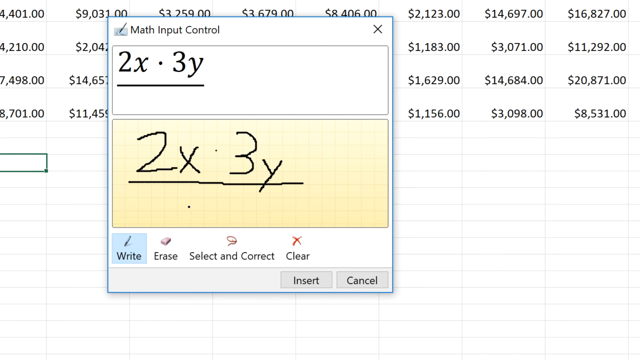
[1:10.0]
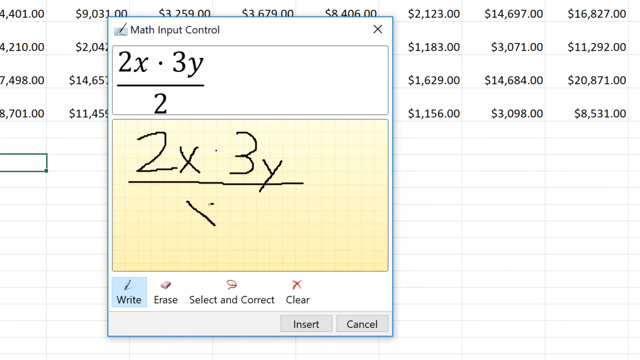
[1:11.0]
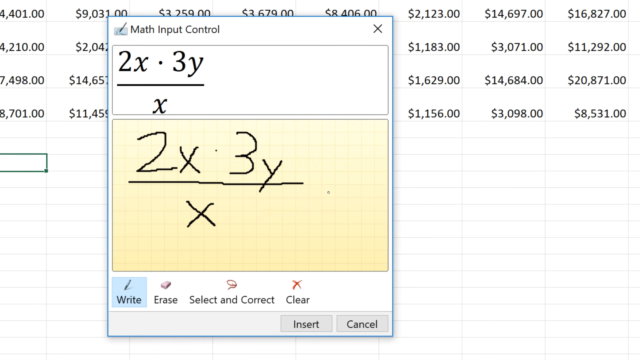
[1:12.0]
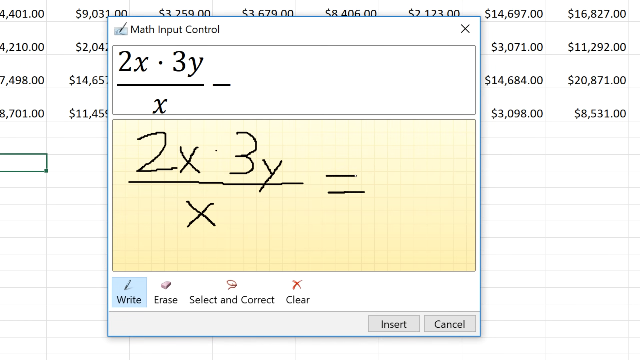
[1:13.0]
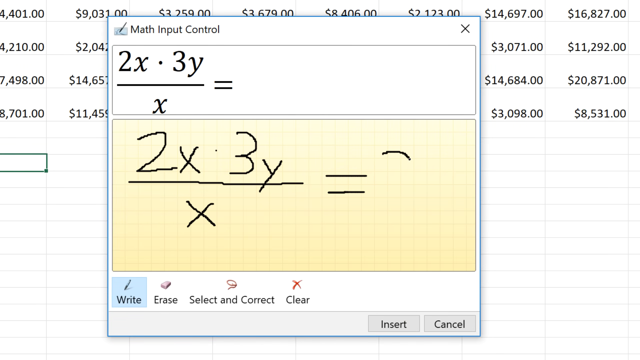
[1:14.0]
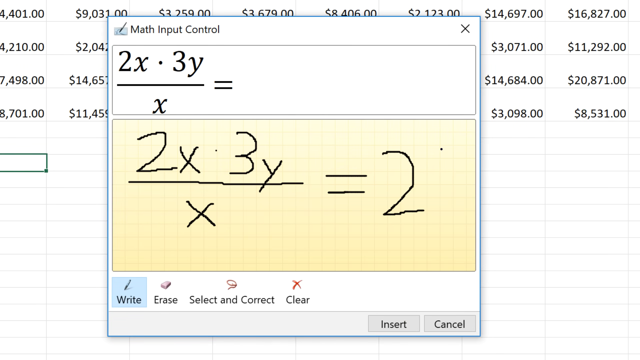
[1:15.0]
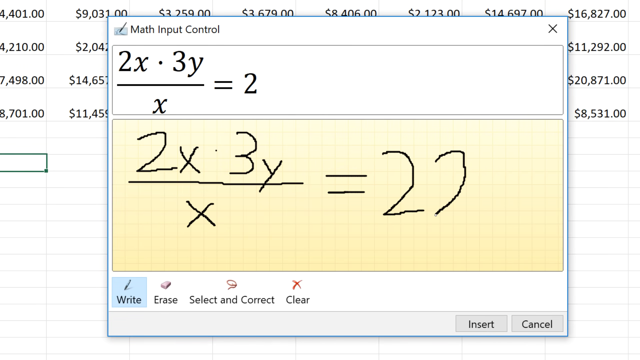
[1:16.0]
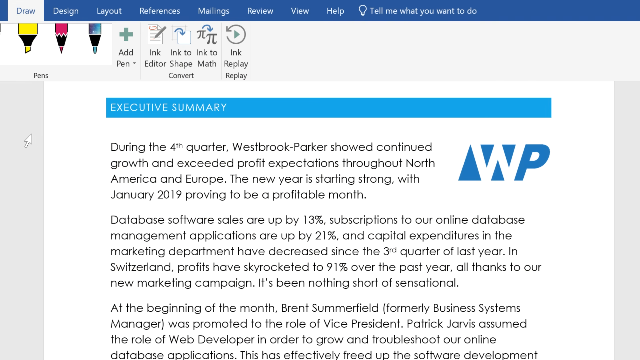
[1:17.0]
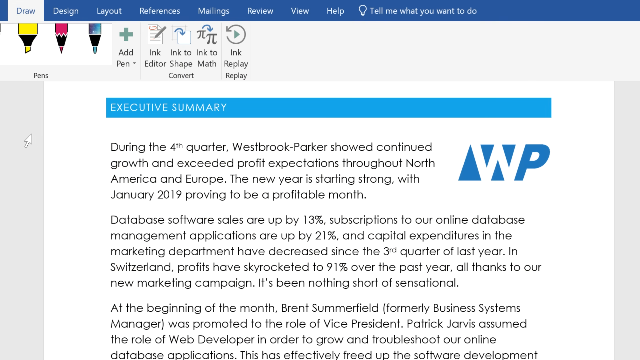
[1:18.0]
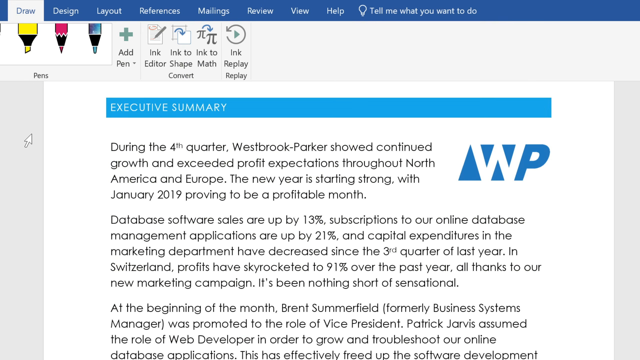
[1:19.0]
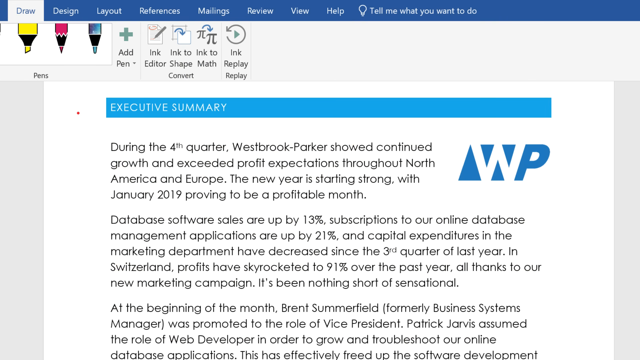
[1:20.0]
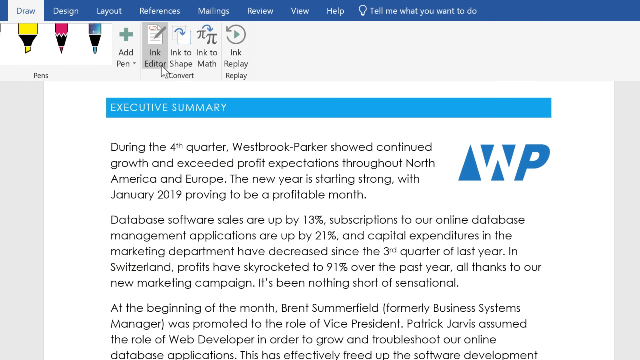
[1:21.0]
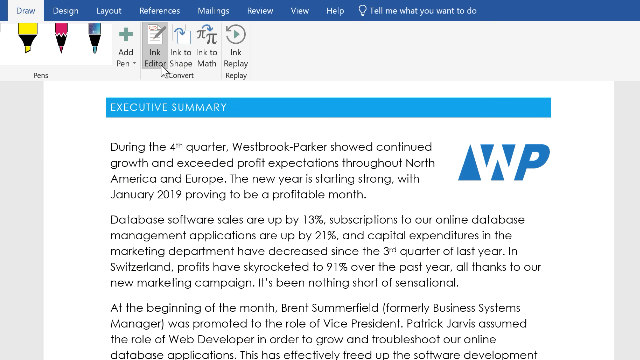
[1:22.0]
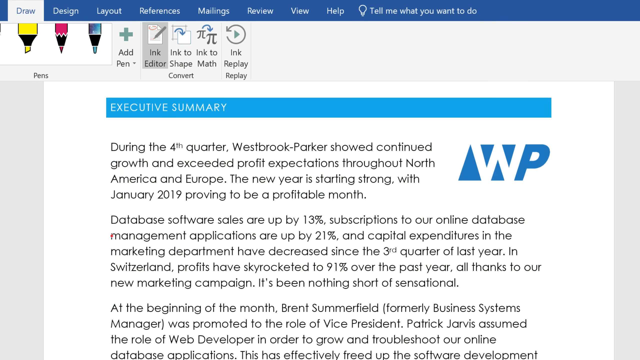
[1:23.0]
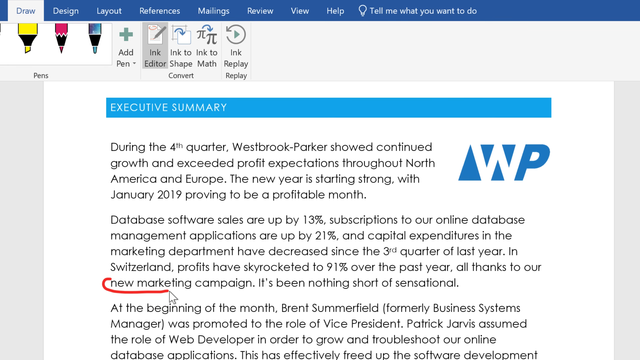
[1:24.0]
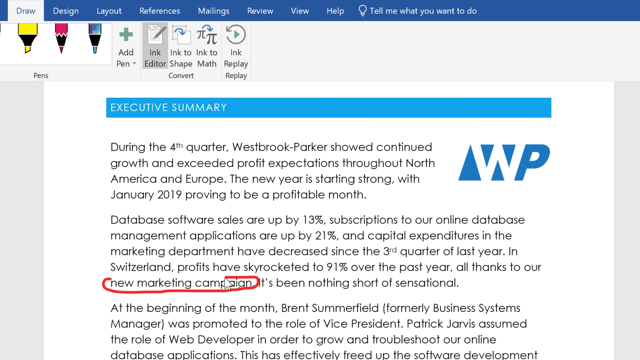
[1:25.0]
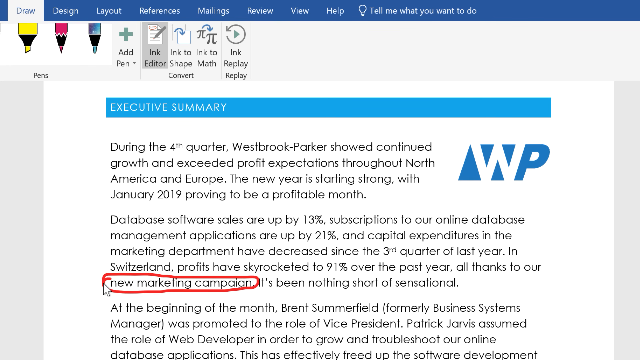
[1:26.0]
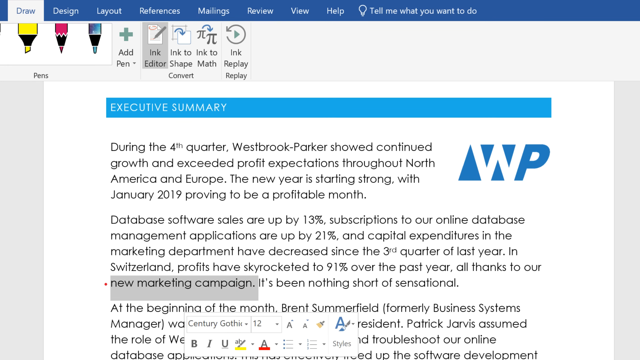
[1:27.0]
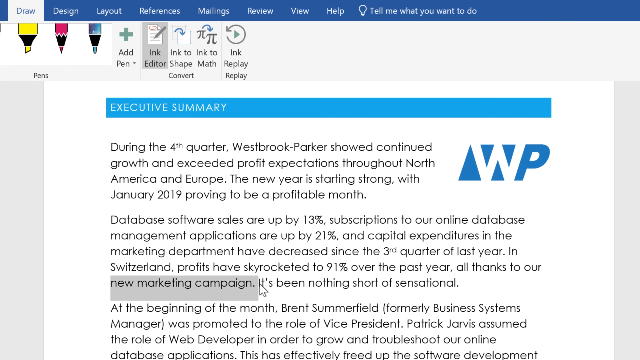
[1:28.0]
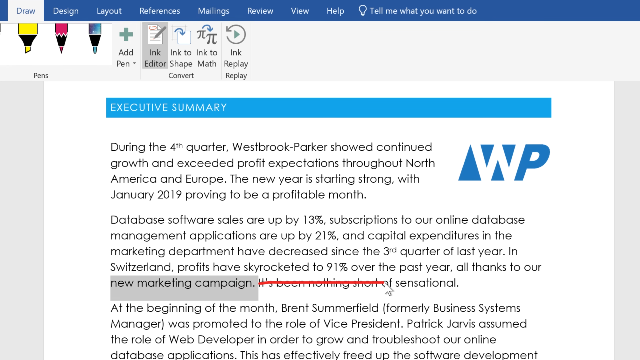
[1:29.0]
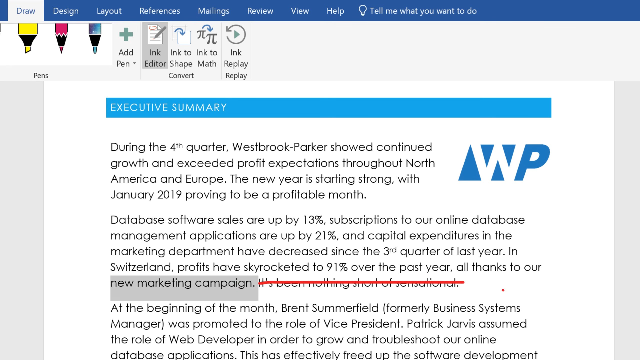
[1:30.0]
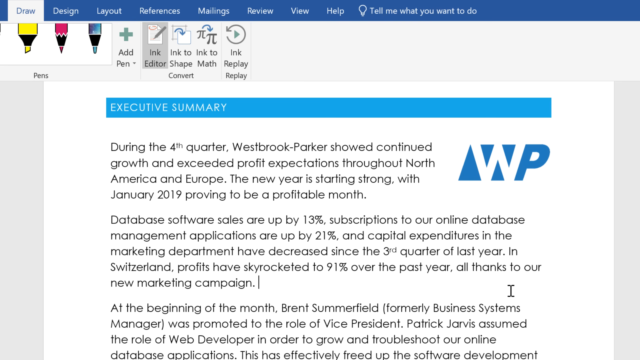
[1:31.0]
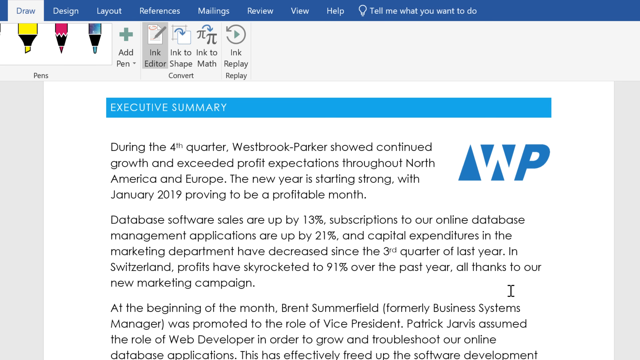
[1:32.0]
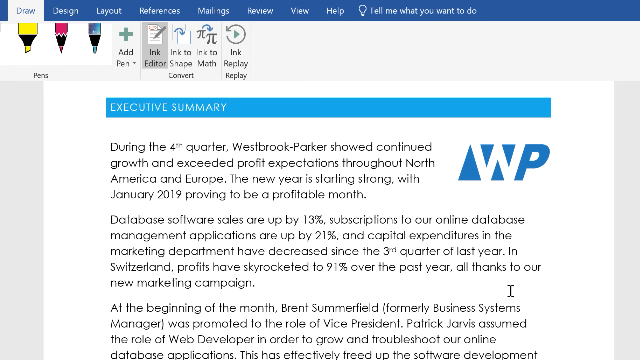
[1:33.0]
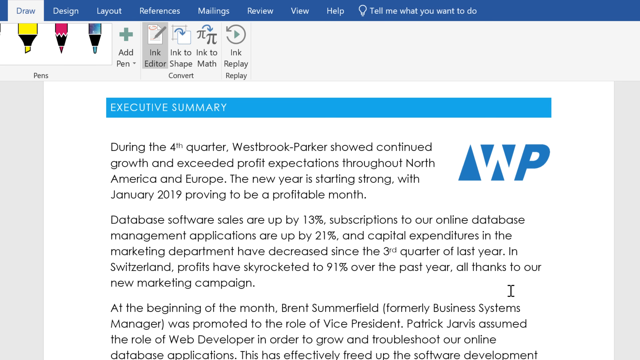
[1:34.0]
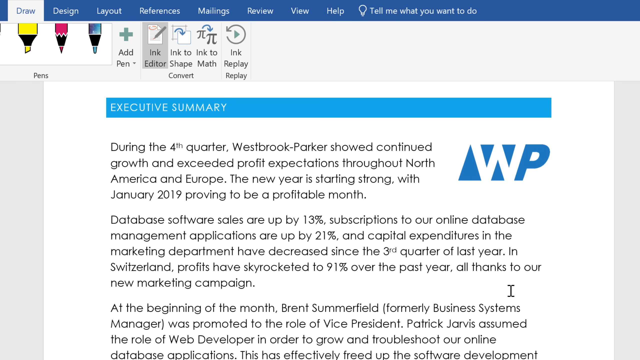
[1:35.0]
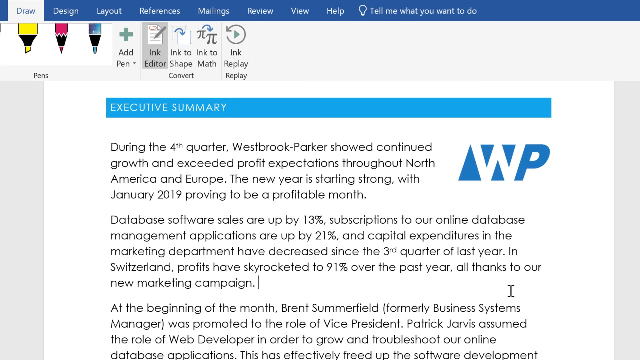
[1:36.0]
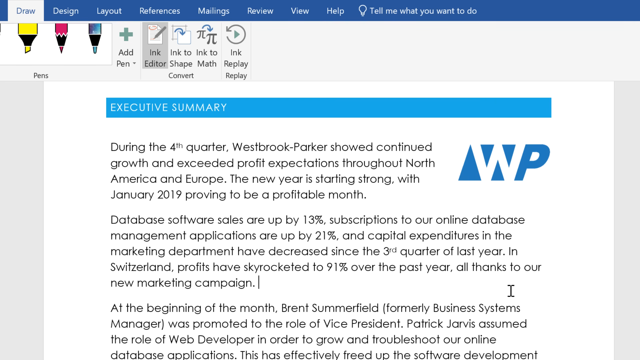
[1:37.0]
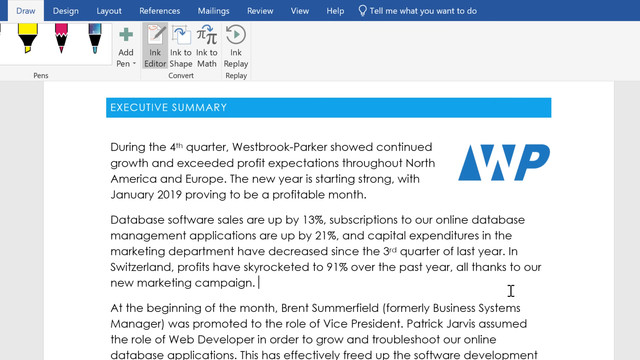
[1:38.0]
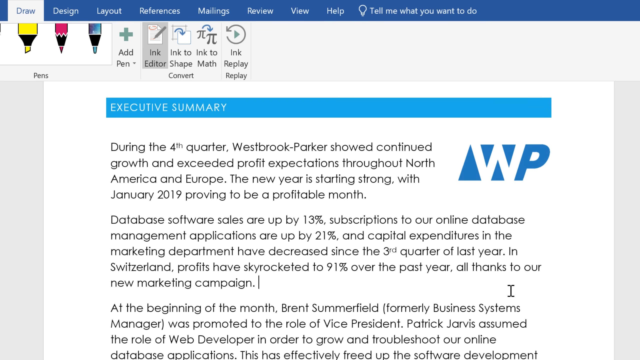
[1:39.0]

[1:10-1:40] What appears to be a spreadsheet with different dollar values is in the background. In front of it is a menu that reads "math, input control" at the top, and some kind of algebraic equation is on the screen. Beneath that is an area for drawing, where something is being drawn almost as if answering the question. The scene then changes to a white background that looks almost like Word. A blue banner across the top reads "Executive Summary," there is a WP logo on the right-hand side, and a couple of paragraphs of black text are underneath. The mouse pointer goes to Ink Editor. Then, at the bottom, the mouse pointer goes around three words, creating a red circle around "New Marketing Campaign." It highlights that and then kind of puts a red line through a couple of words to the right, which removes those words, kind of like an editing feature being displayed. The cursor is still blinking, and then the view returns to the beginning of the screen.